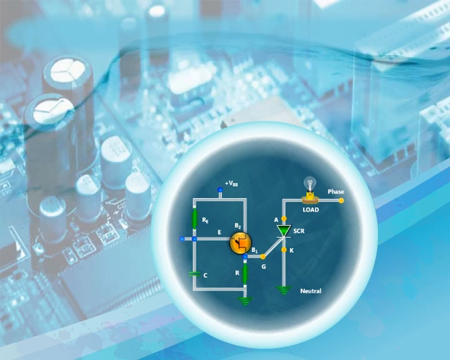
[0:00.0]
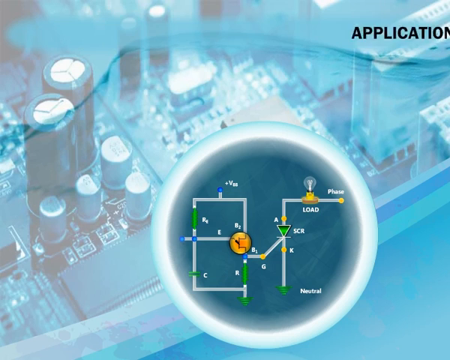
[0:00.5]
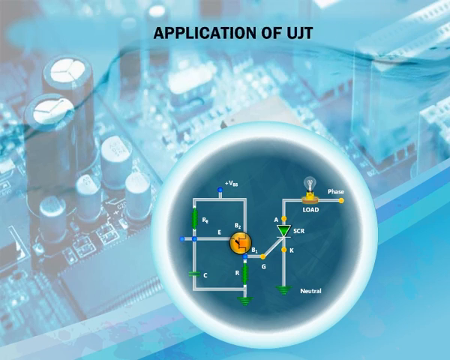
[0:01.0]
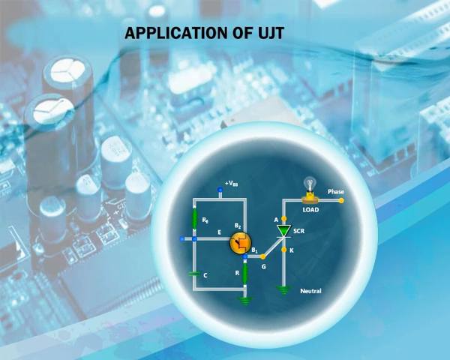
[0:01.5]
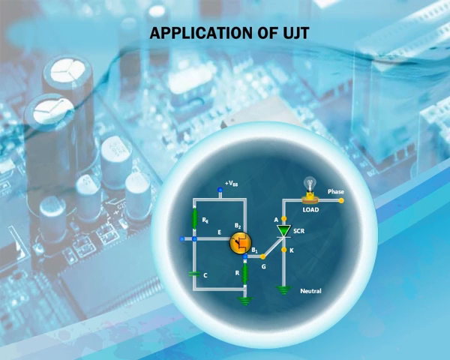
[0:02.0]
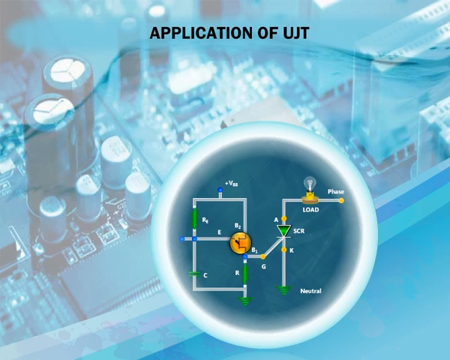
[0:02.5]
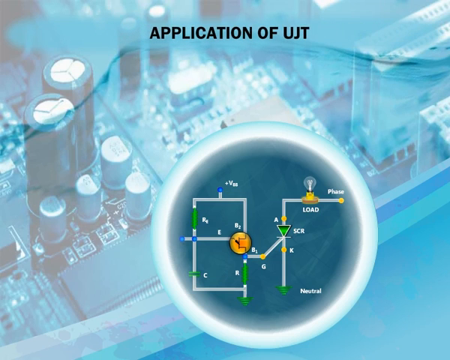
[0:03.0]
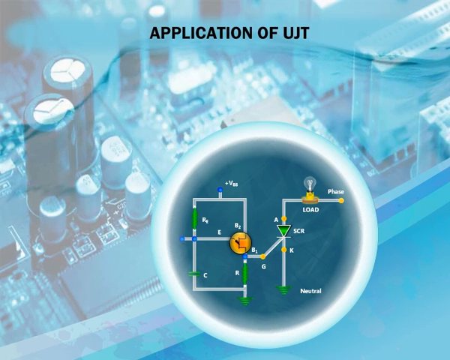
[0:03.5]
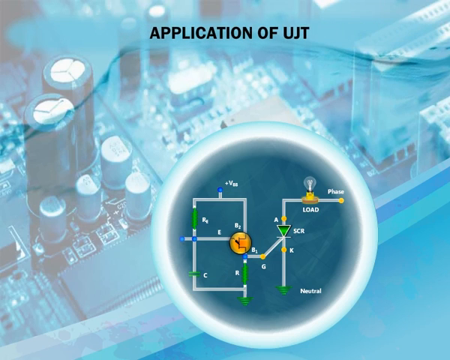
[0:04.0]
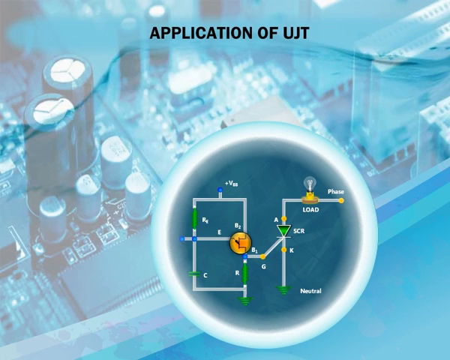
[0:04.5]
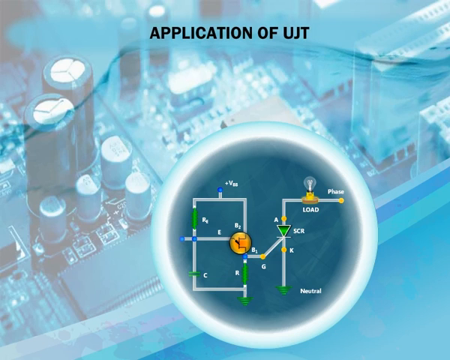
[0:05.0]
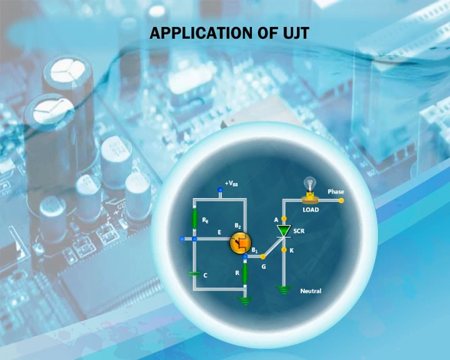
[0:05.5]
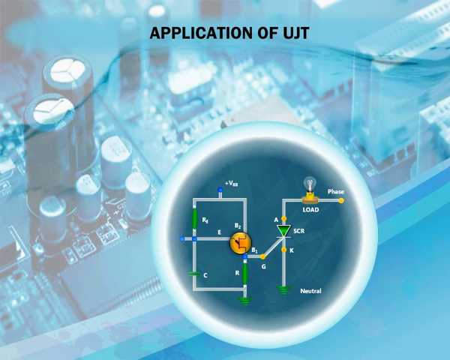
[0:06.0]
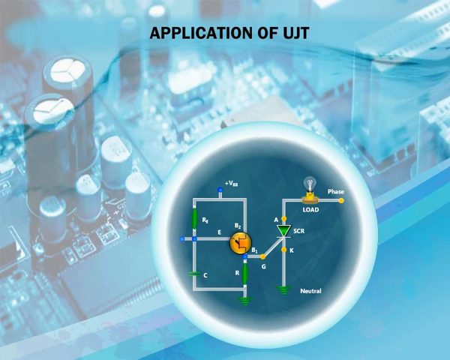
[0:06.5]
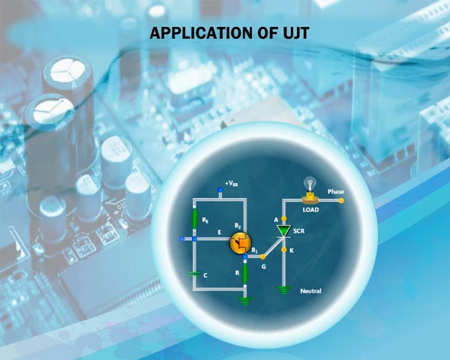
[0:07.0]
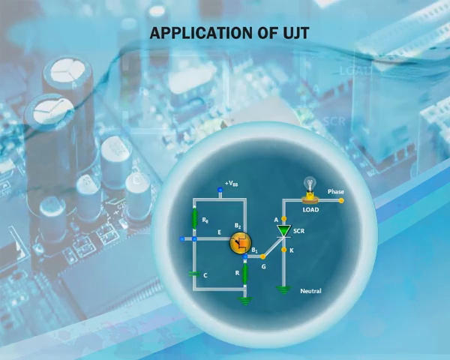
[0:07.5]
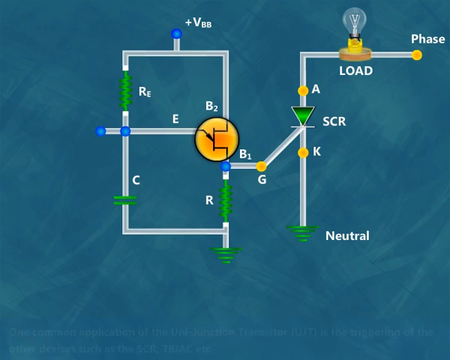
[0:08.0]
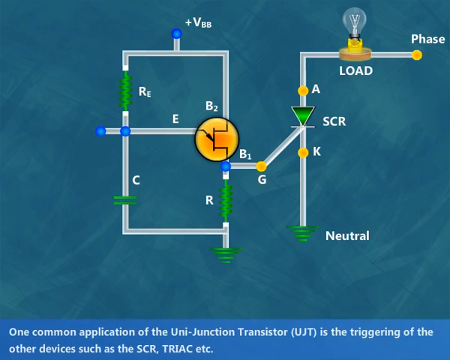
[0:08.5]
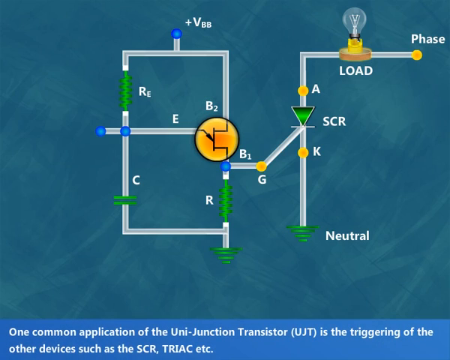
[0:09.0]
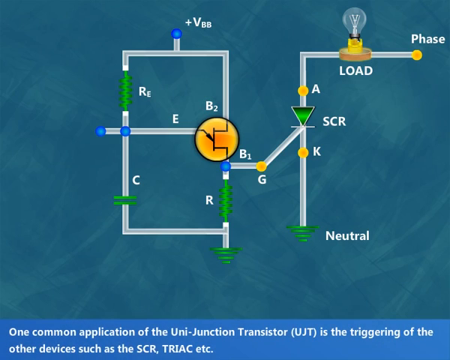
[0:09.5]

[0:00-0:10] The video seems to focus on technology and introduces an application of the UJT. It shows small components like those found in a broken computer or phone, presented as parts of an electric circuit with an input and an output, negative, positive and neutral charges, and a battery or electricity as the power source.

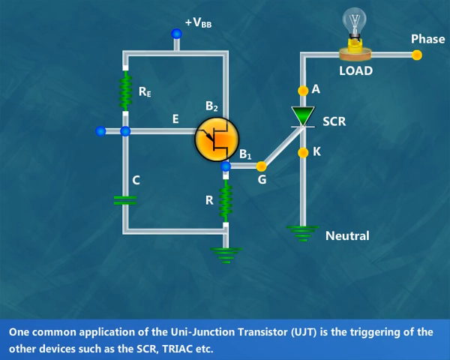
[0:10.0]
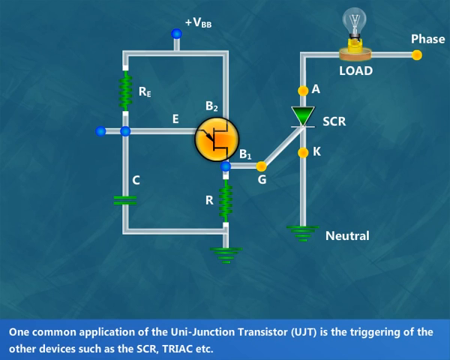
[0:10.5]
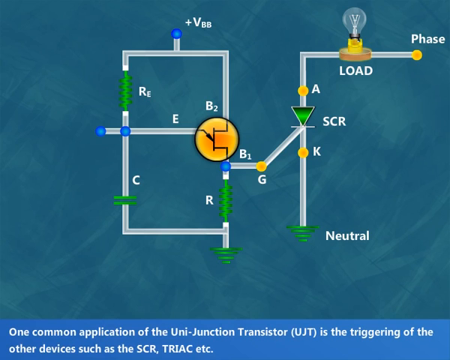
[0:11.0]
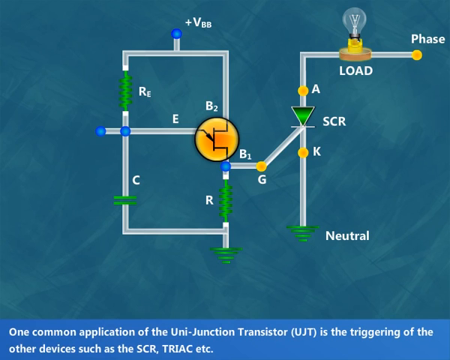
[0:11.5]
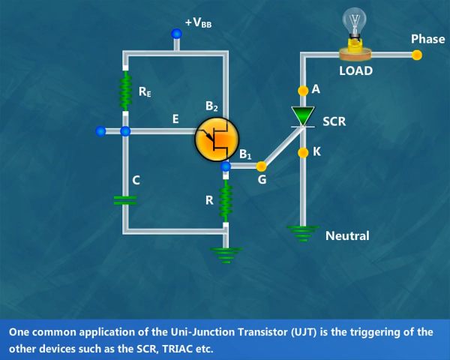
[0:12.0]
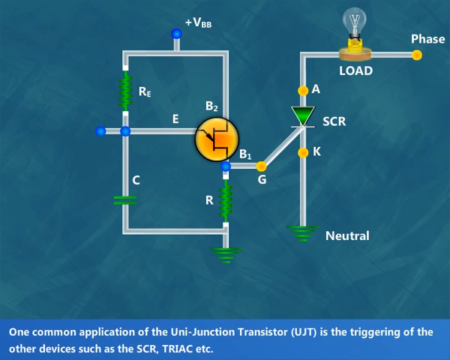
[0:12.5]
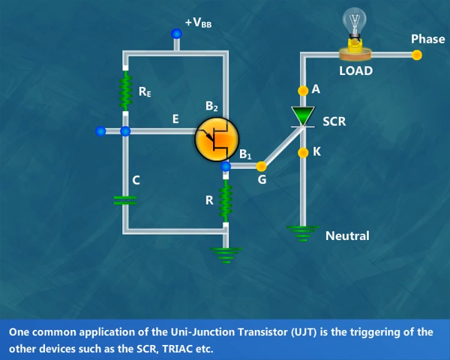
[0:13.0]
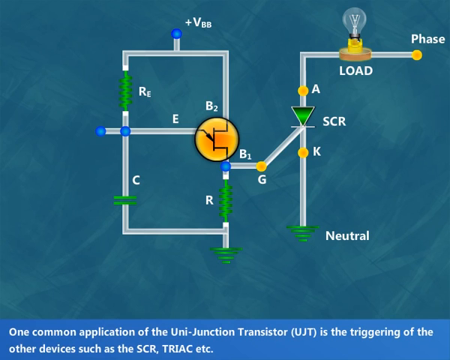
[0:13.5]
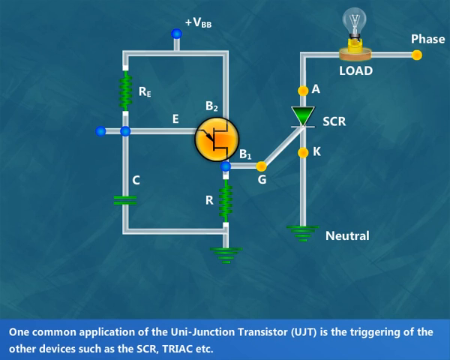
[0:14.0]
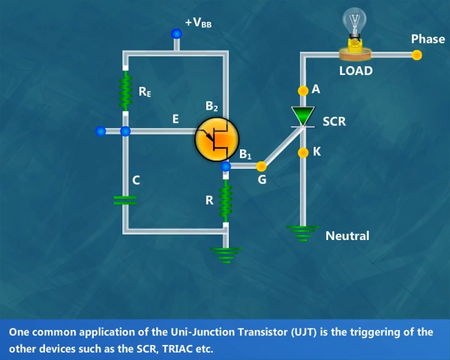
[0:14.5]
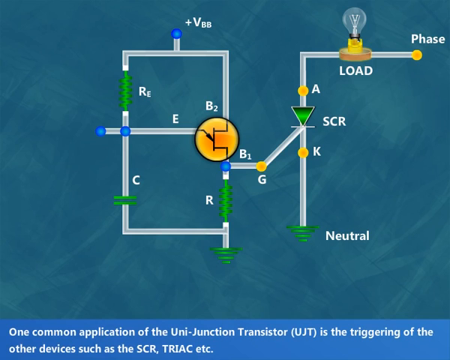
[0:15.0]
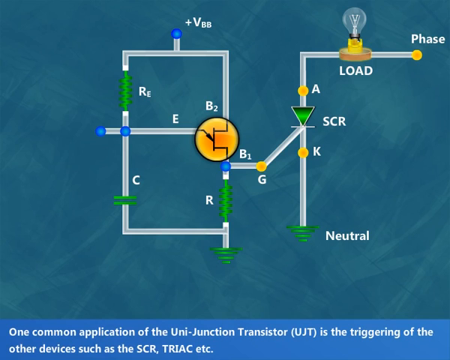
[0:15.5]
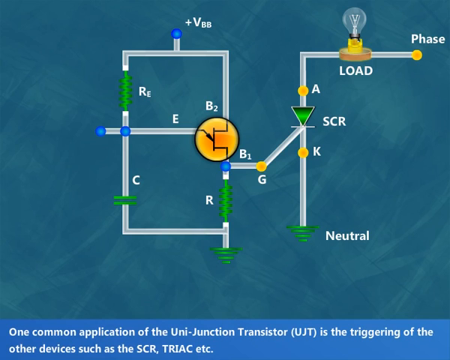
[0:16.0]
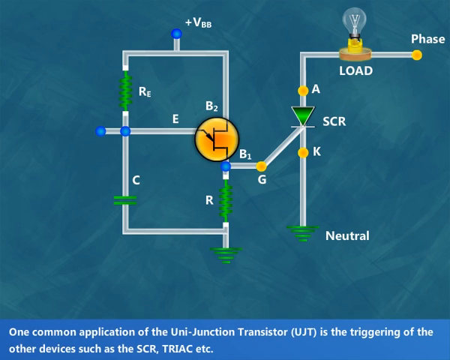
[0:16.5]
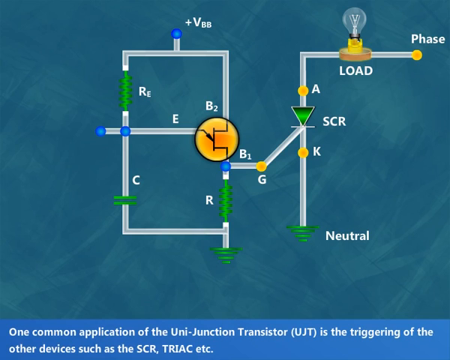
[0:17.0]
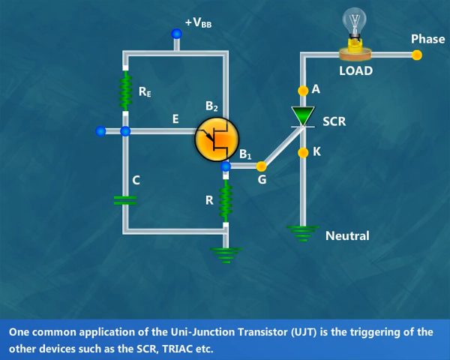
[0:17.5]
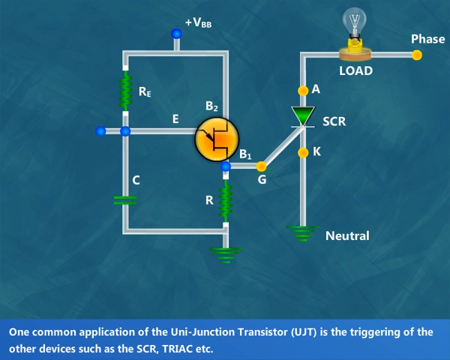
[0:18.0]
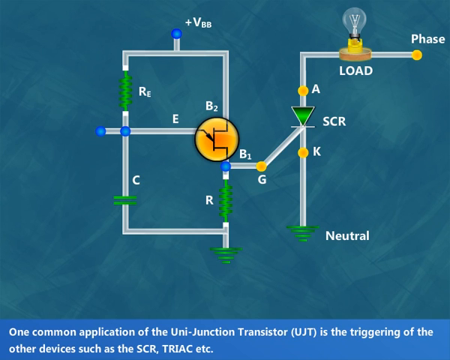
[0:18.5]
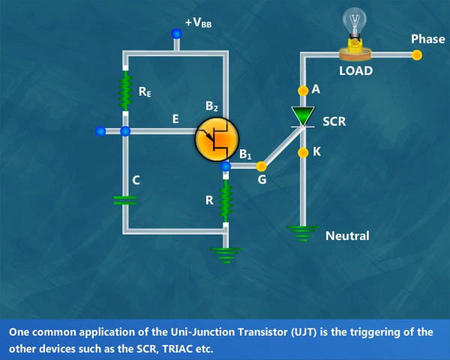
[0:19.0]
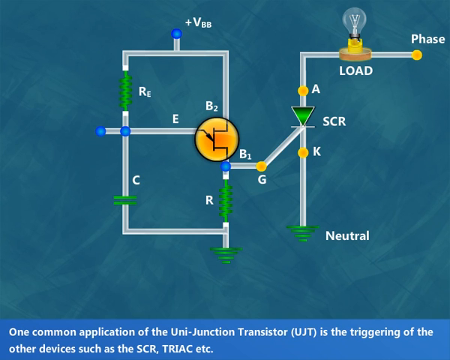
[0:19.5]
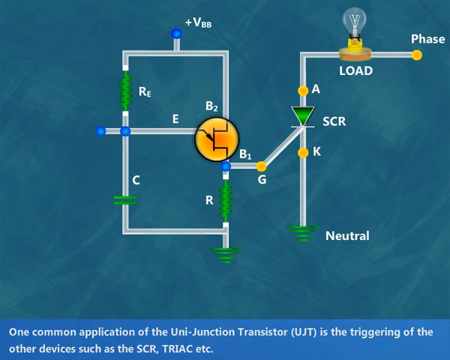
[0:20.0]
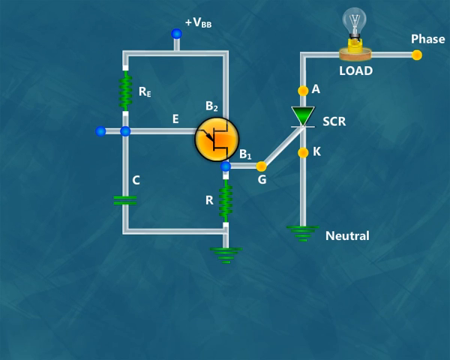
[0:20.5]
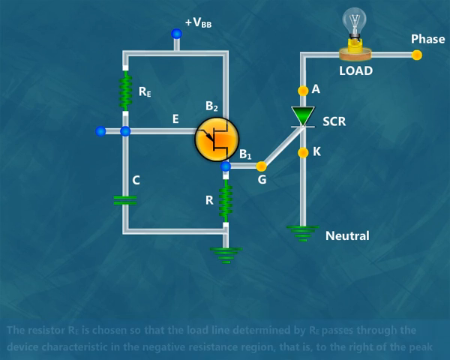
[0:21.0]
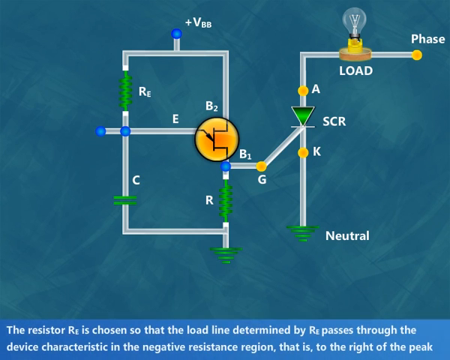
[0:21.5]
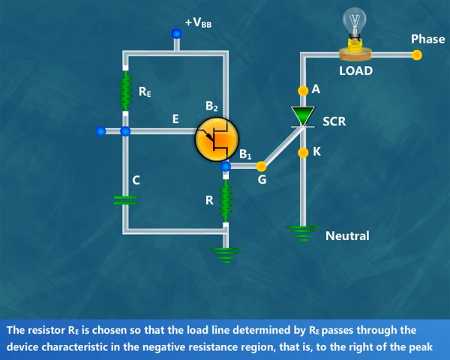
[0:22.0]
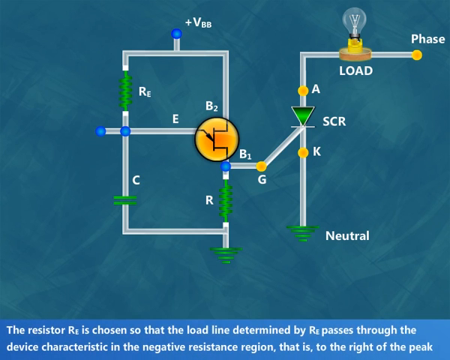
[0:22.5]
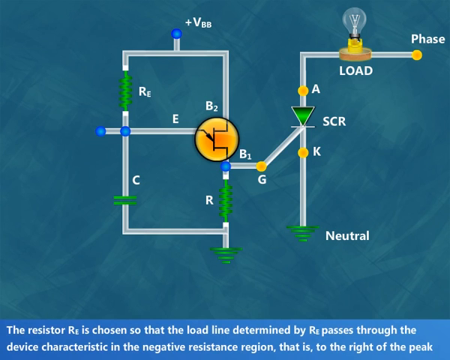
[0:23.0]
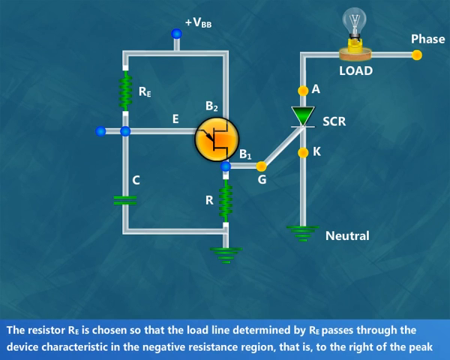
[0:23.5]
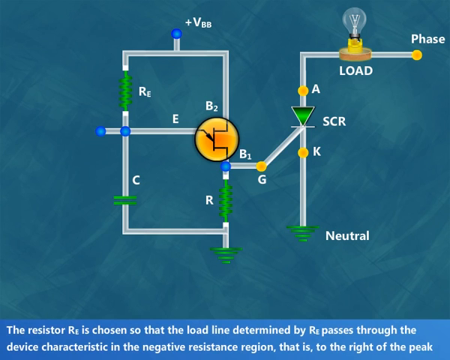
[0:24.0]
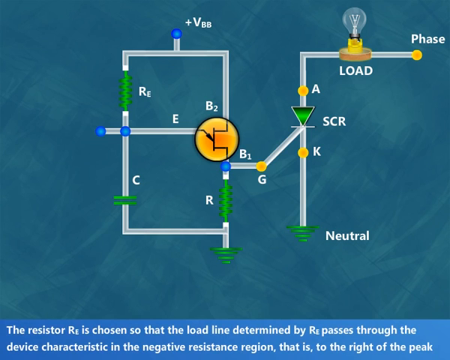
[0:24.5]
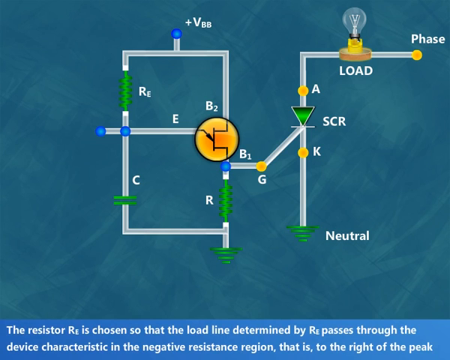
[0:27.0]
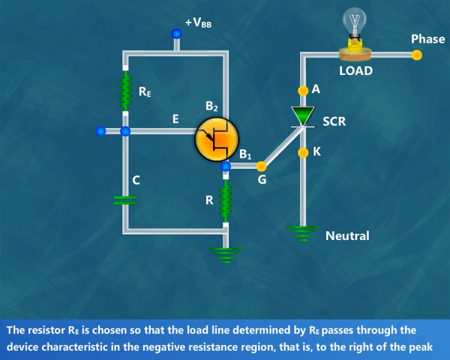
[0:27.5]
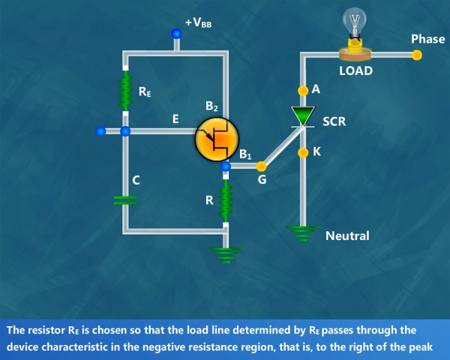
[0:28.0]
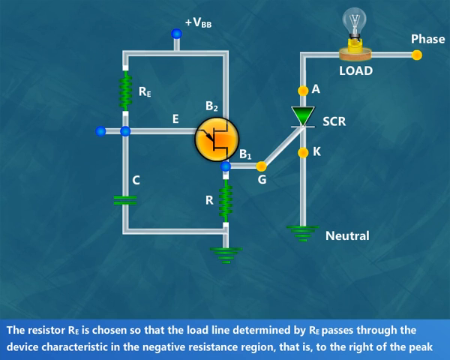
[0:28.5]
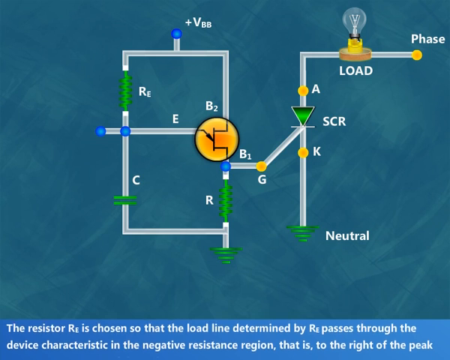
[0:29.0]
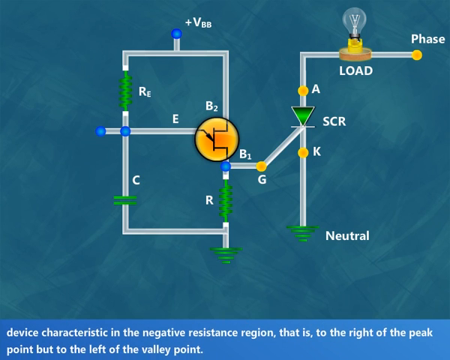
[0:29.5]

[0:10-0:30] The image looks more like a circuit board. There is a light bulb, which is the load, along with resistors, the voltage, and a battery or current source.